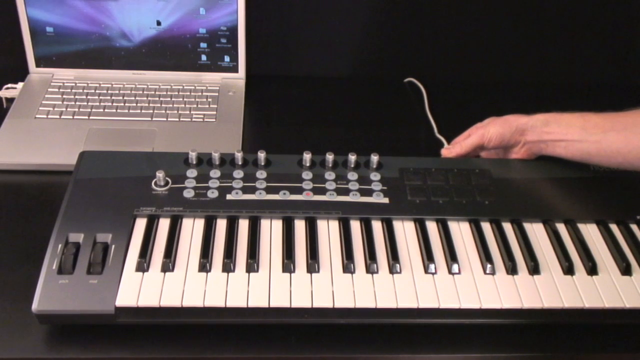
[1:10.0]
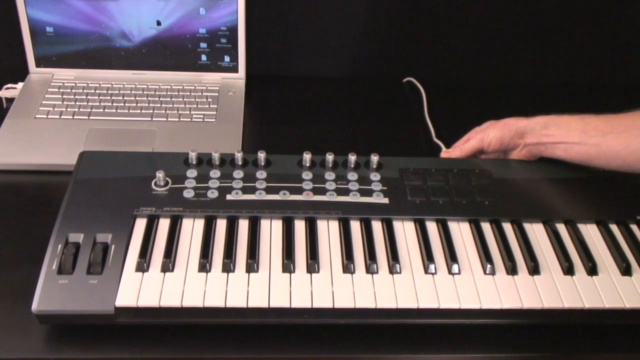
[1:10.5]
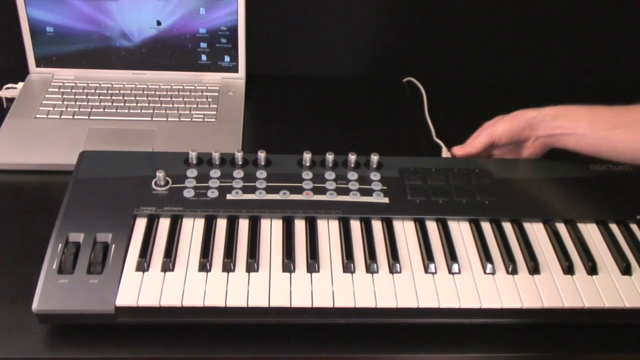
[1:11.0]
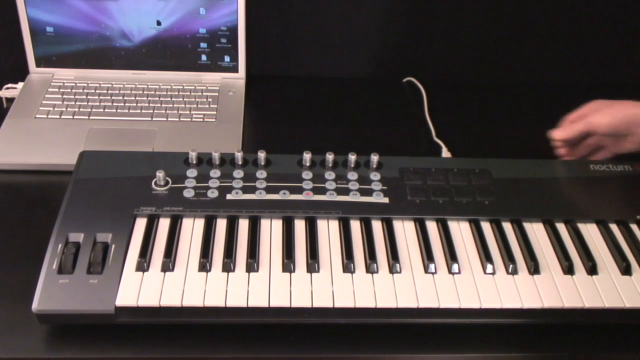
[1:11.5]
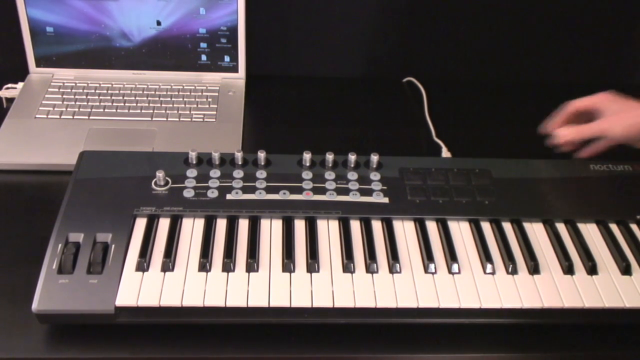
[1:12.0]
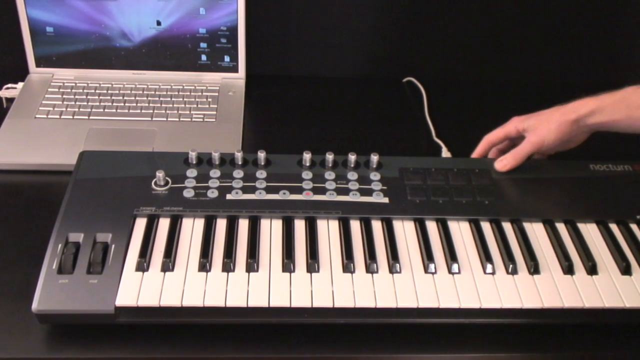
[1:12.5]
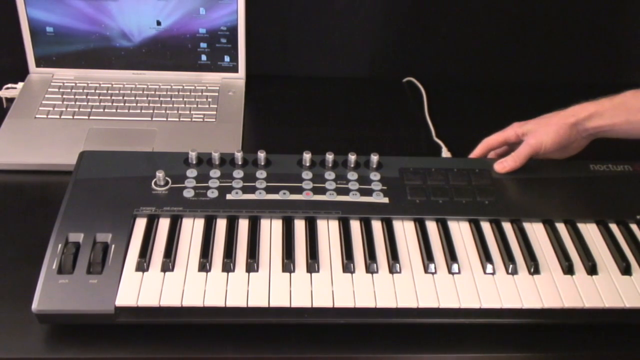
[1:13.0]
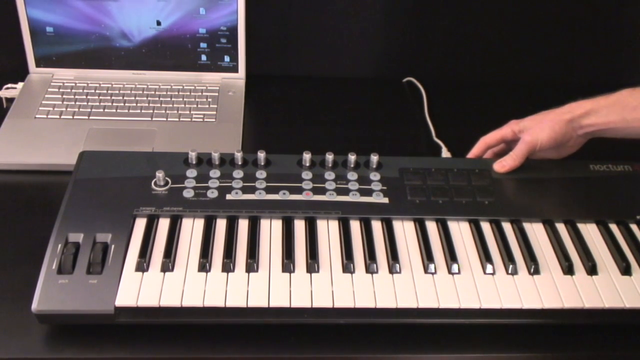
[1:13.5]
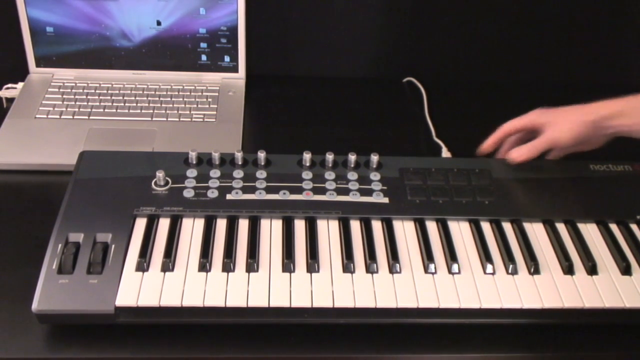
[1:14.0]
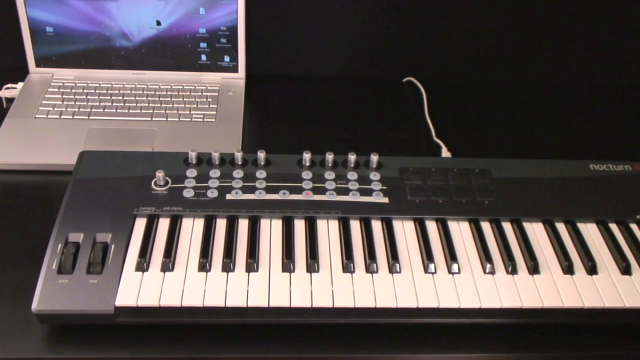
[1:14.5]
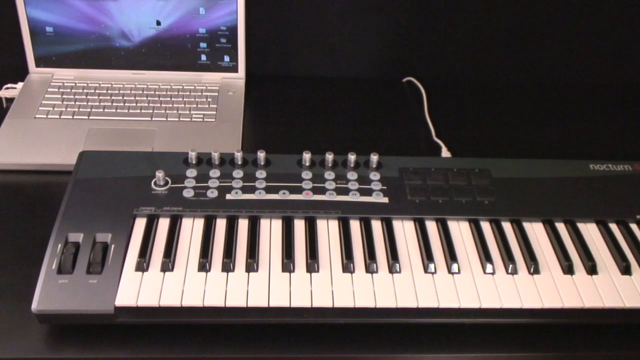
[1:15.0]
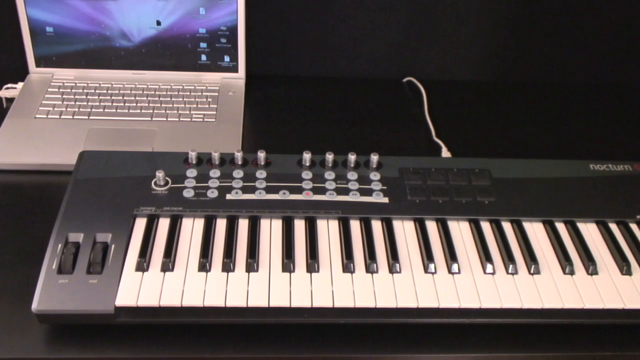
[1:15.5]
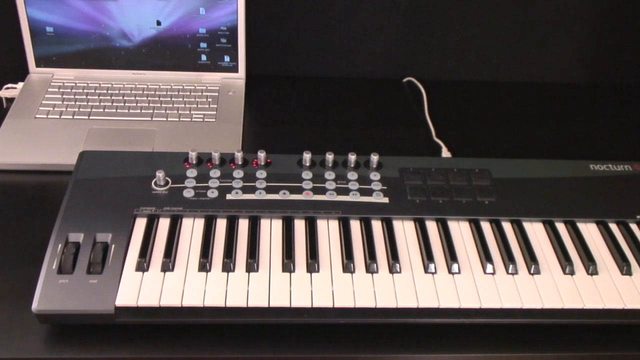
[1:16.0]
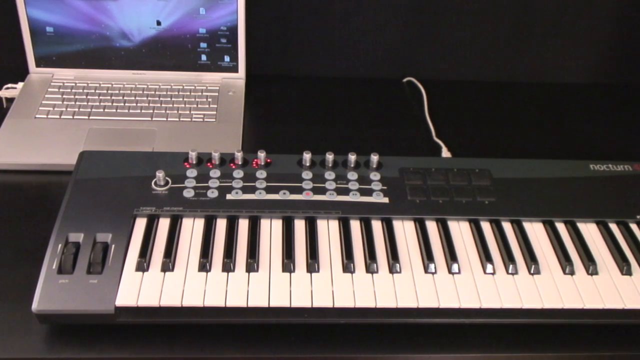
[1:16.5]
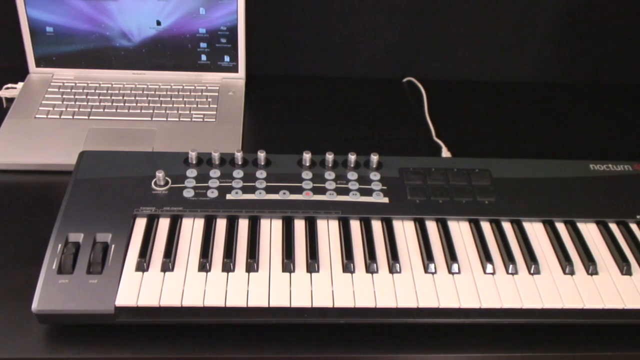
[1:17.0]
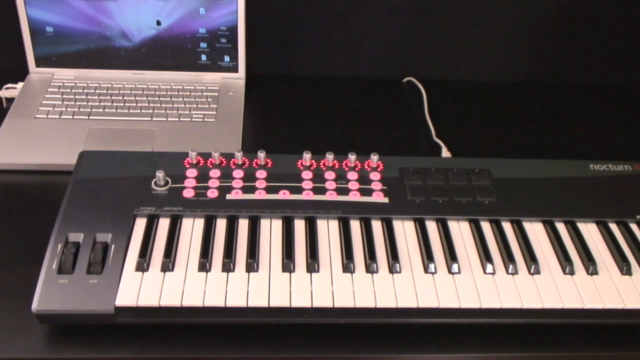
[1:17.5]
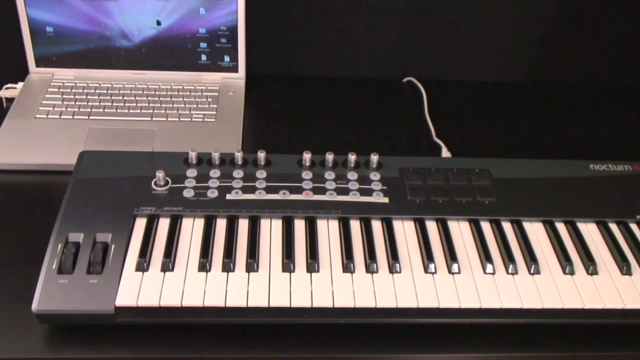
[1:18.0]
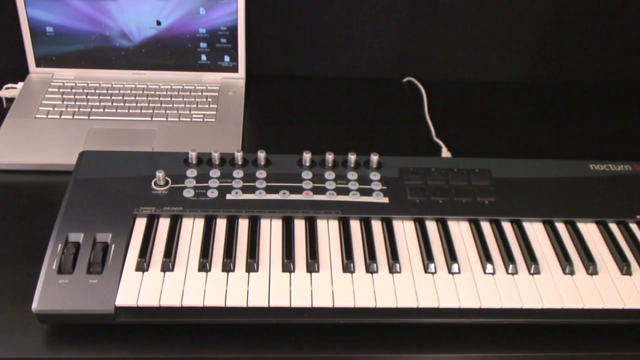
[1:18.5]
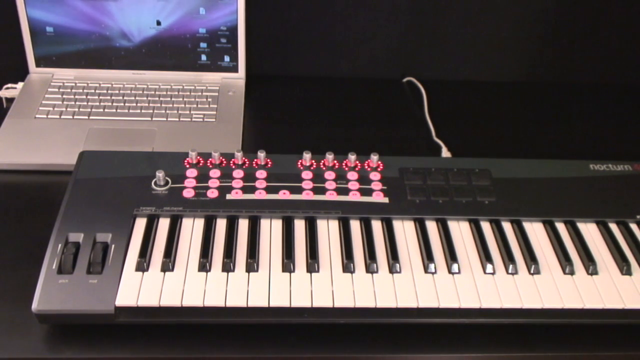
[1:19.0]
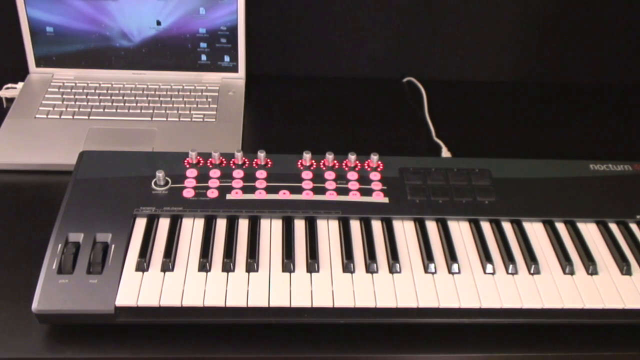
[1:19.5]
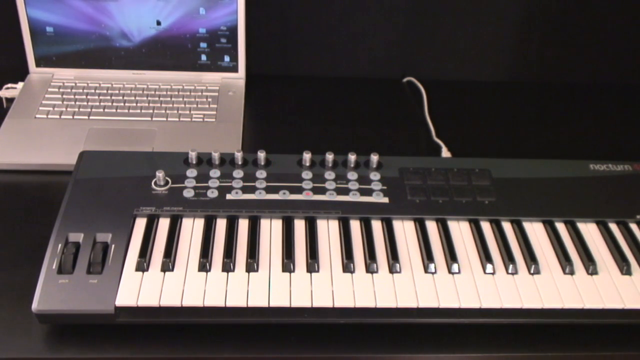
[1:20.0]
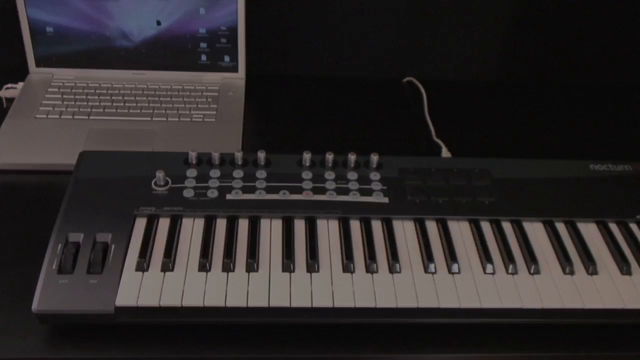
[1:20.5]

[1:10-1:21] A user plugs a gray lead into the back of the keyboard. They briefly move their hand away to the right, then return it and appear to press what seems to be possibly a power button at the back of the keyboard. Within a few seconds, the four rotary dials on the left-most side of the keyboard illuminate with little glowing lights around them. Then suddenly all eight rotary dials are illuminated, along with all the buttons beneath them in that section, which look a bit like keypads, all lit in a pinkish-red shade. After a few seconds they all go dim, then illuminate again.